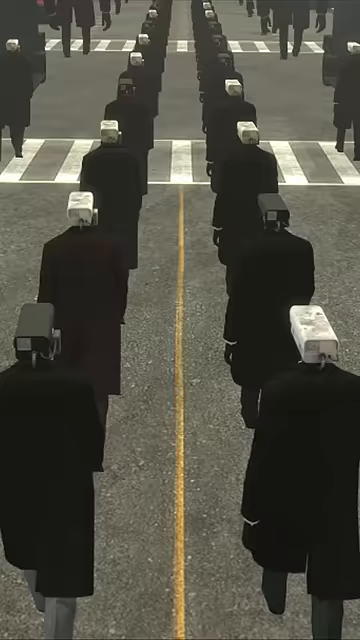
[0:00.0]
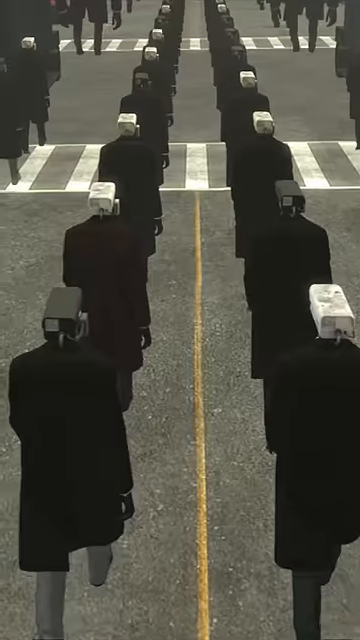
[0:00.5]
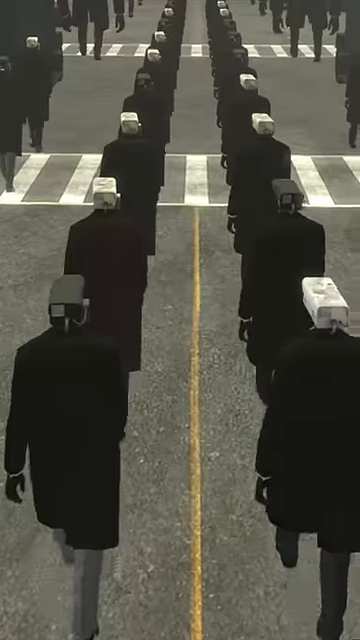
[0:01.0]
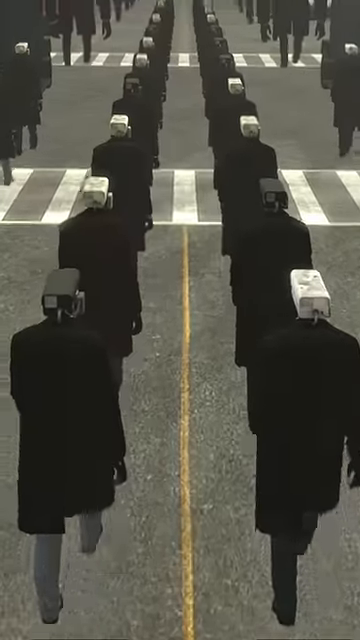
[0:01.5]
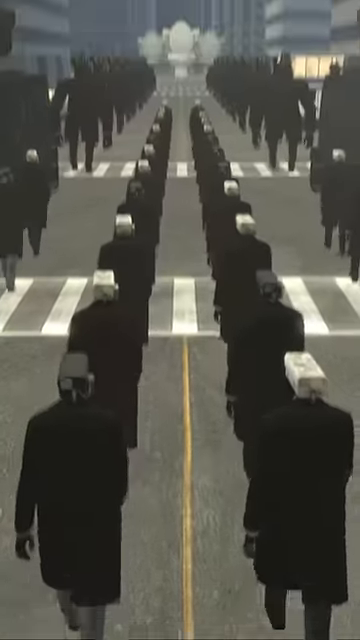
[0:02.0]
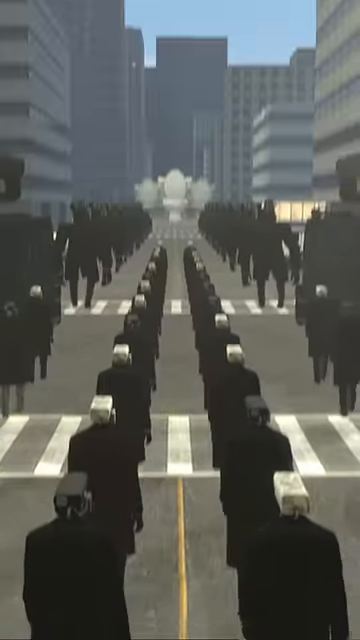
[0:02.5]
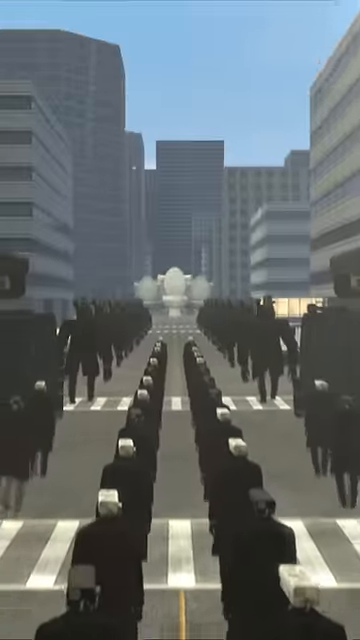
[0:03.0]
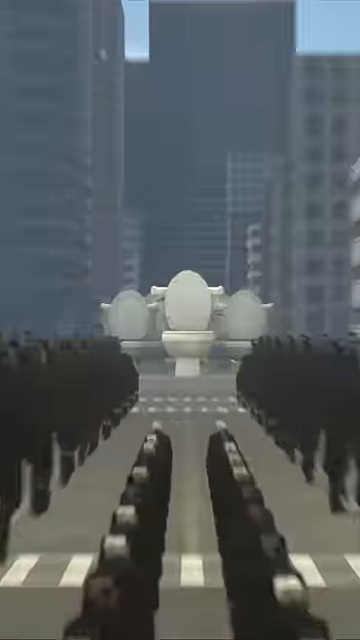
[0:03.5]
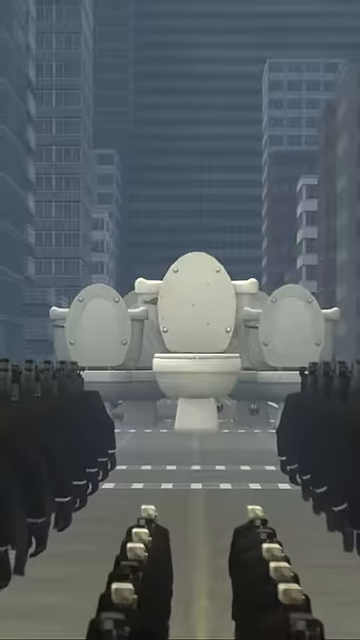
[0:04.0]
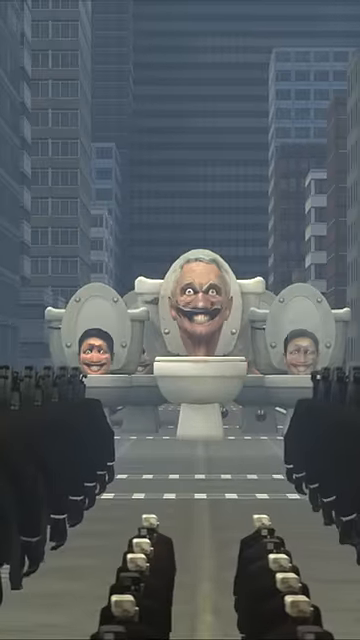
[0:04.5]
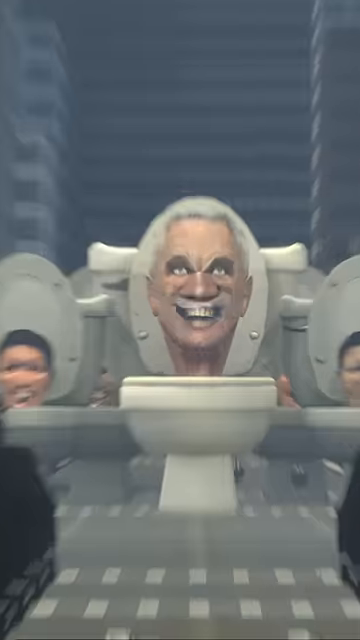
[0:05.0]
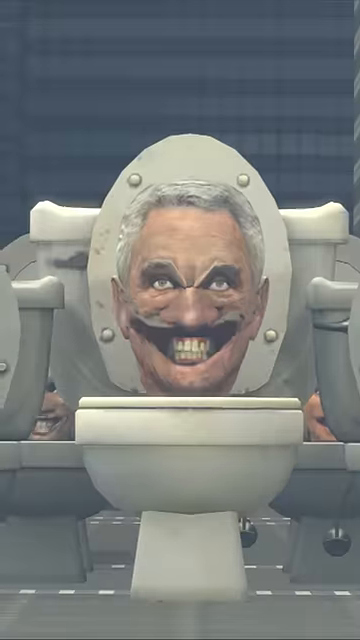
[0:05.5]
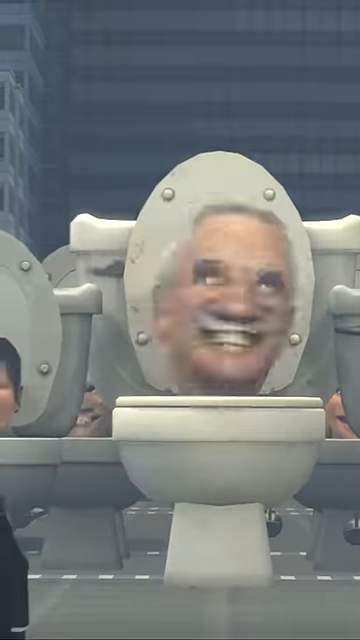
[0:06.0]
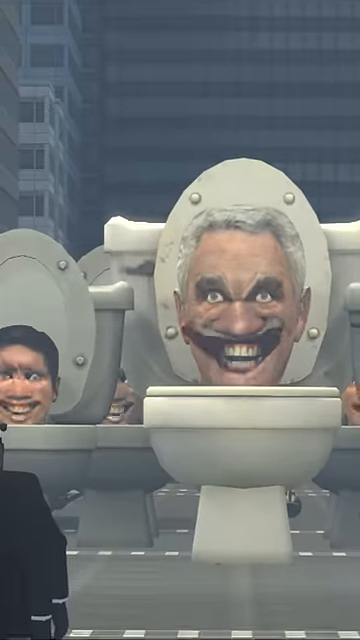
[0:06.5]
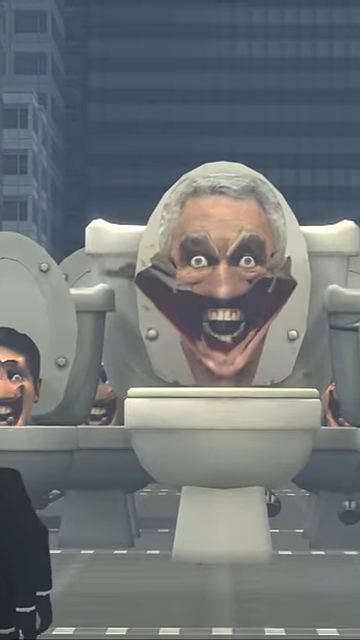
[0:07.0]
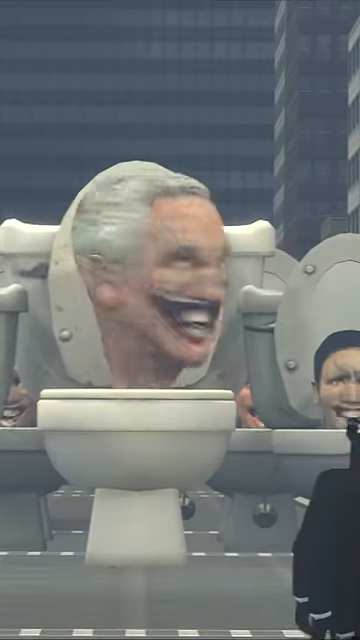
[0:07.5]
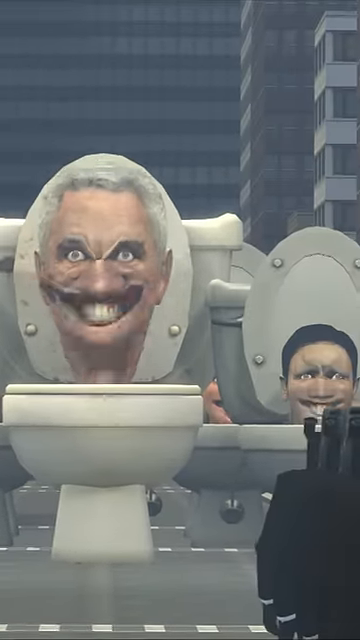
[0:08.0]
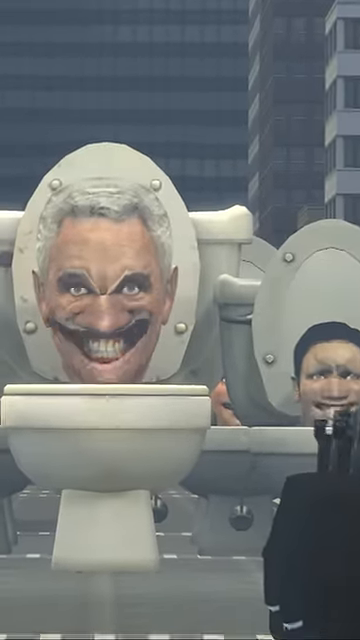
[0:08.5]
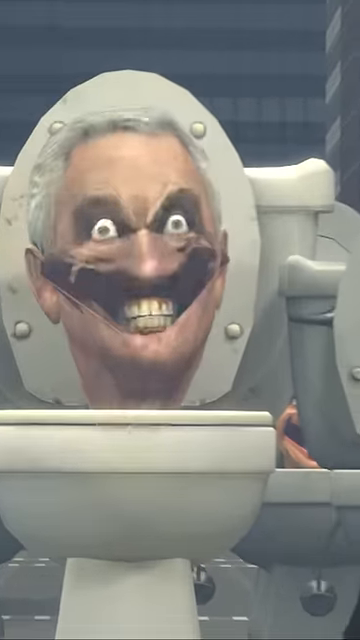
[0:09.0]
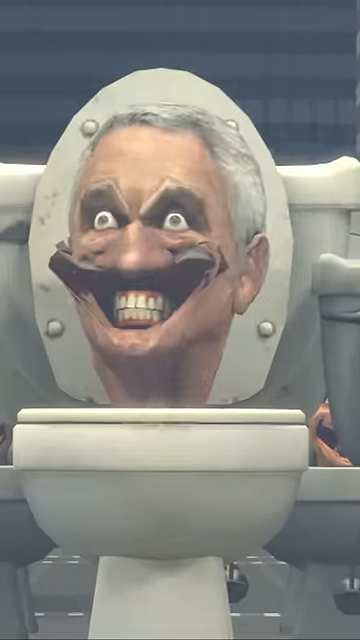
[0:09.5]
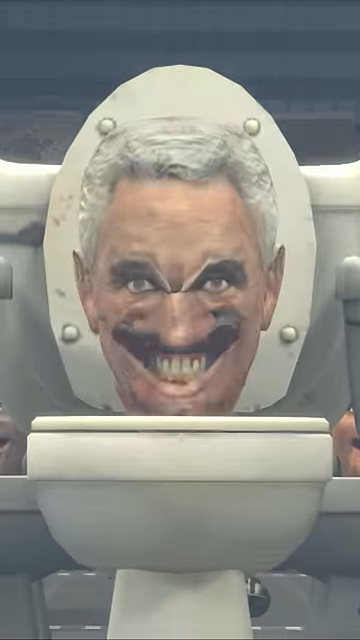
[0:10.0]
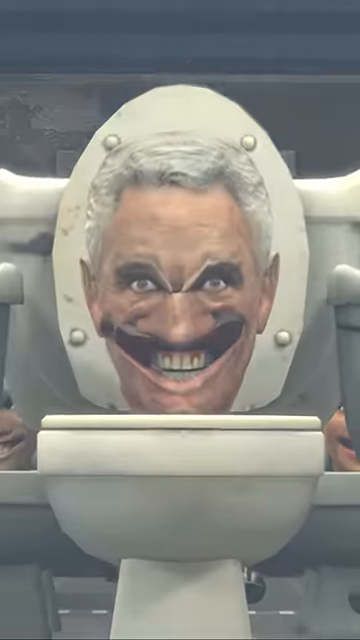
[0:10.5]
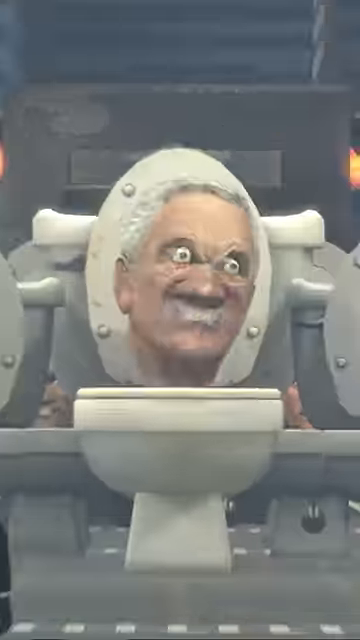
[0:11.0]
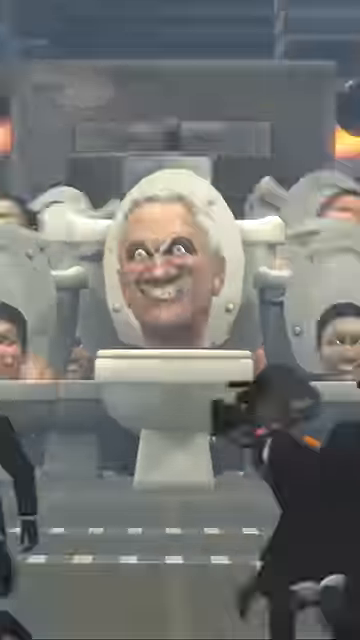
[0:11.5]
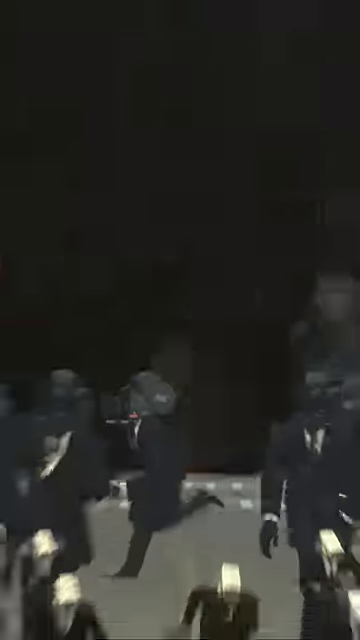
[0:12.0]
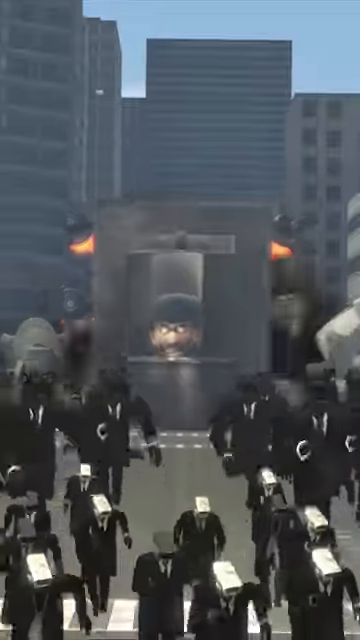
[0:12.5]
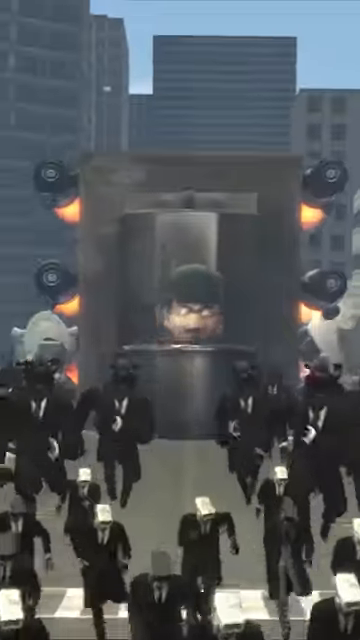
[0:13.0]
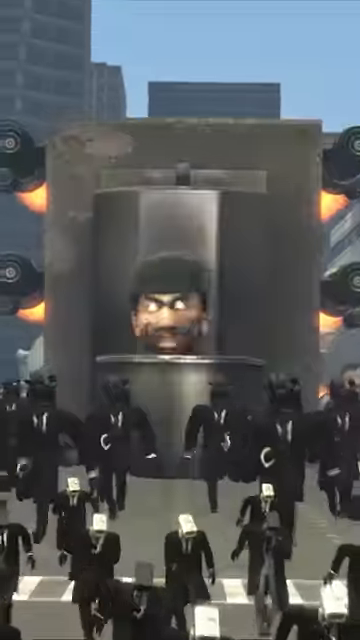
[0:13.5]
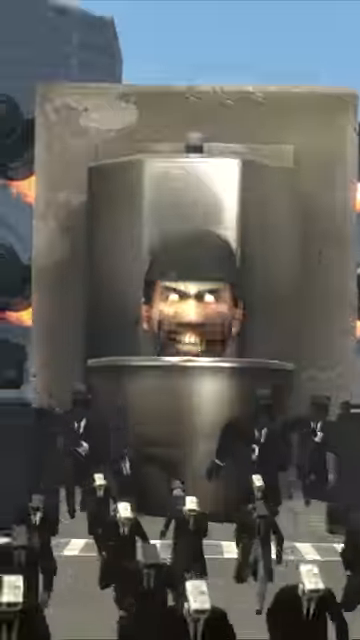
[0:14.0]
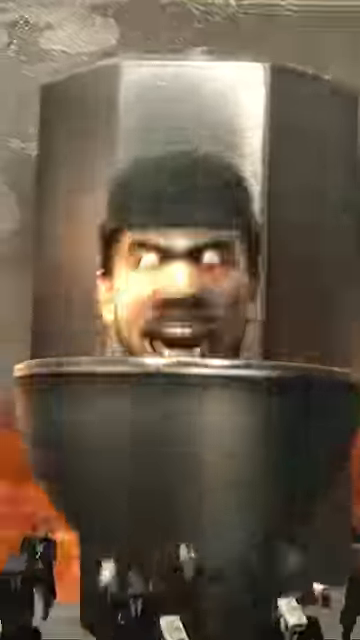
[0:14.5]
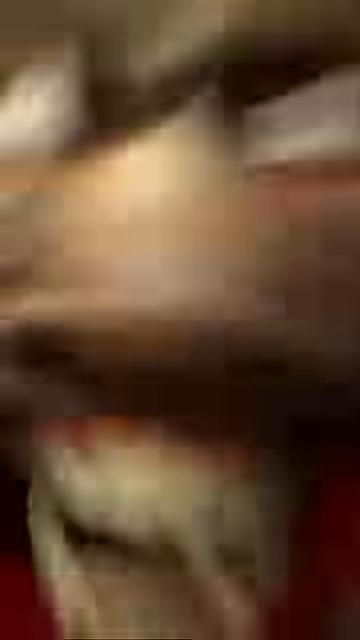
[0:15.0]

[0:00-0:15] People march down a street toward huge white toilets that have heads in them, and the people are saying something. There is a whole bunch of people, all wearing black, with black and white hats that look kind of like video cameras. The main head in the toilets is kind of an old guy with gray hair, and two guys with dark hair are a little bit back behind him, with others behind that. All of a sudden, it kind of blows up. Then a big metal thing with another head in it comes running at the people, and they go scattering everywhere. It appears to be some kind of game.